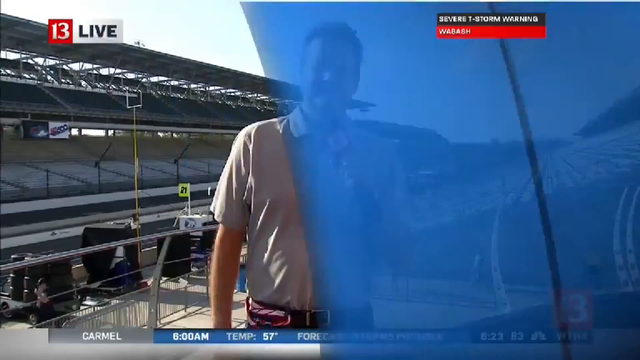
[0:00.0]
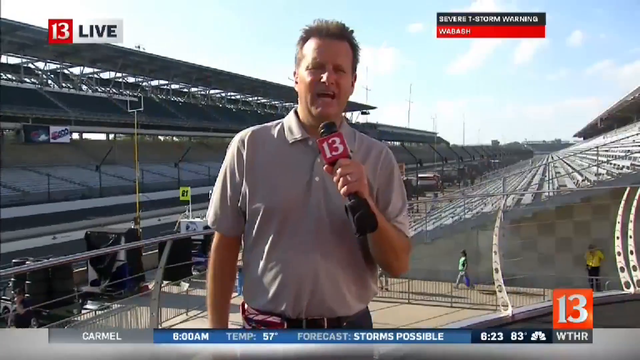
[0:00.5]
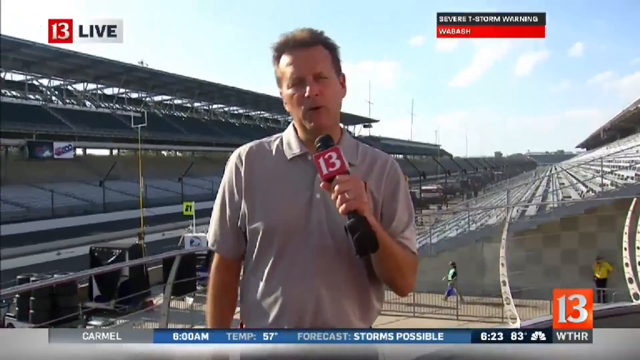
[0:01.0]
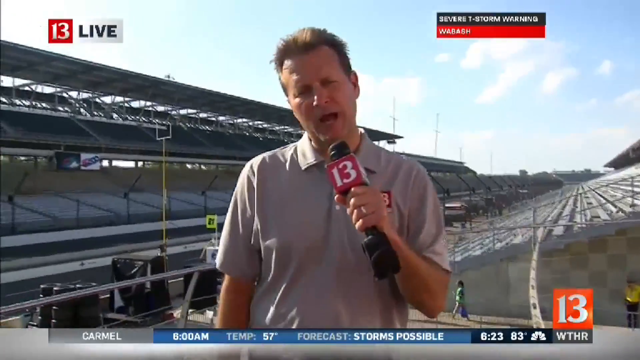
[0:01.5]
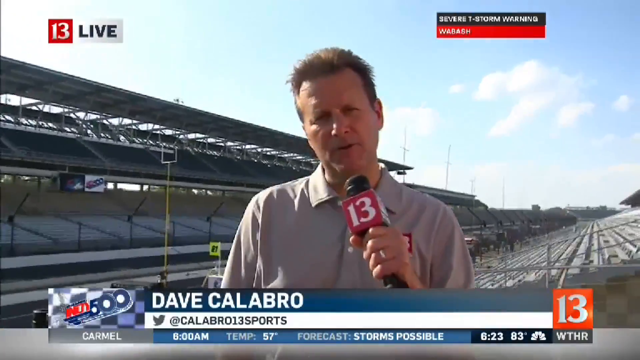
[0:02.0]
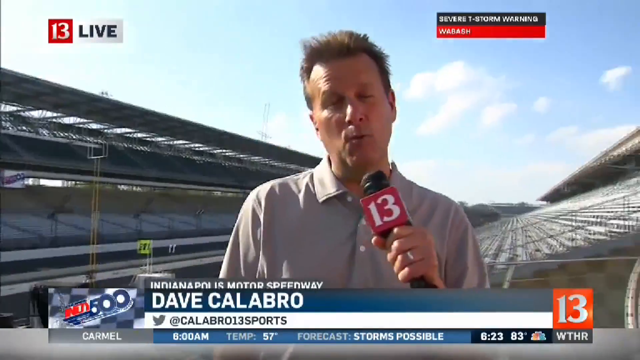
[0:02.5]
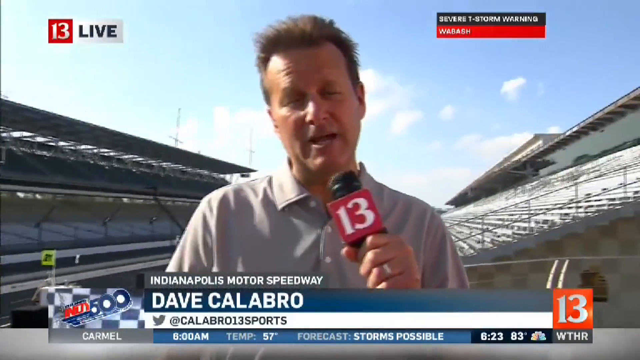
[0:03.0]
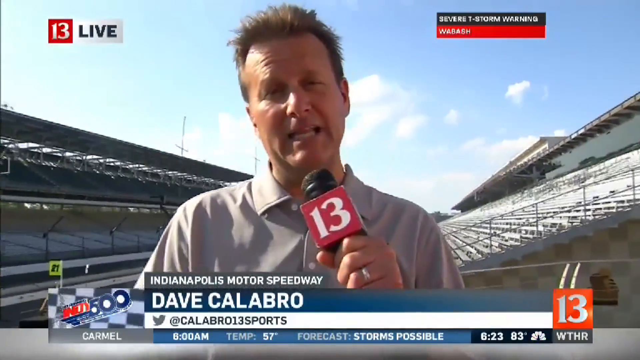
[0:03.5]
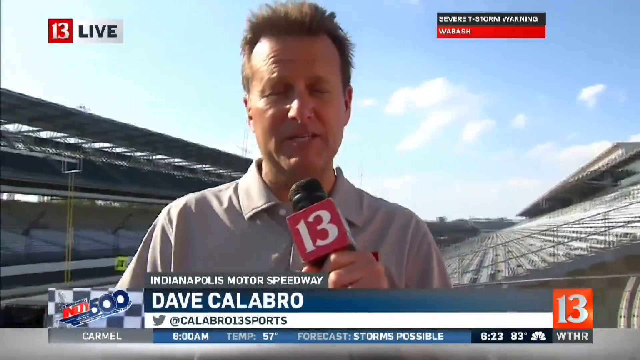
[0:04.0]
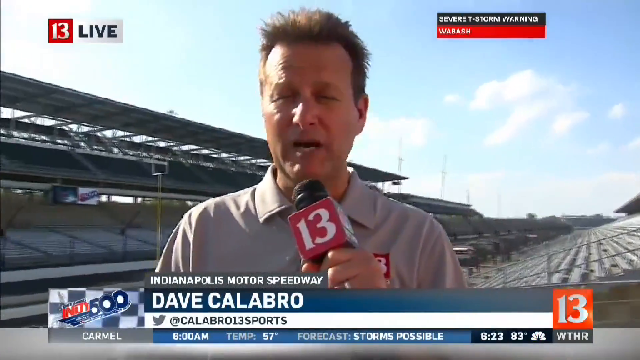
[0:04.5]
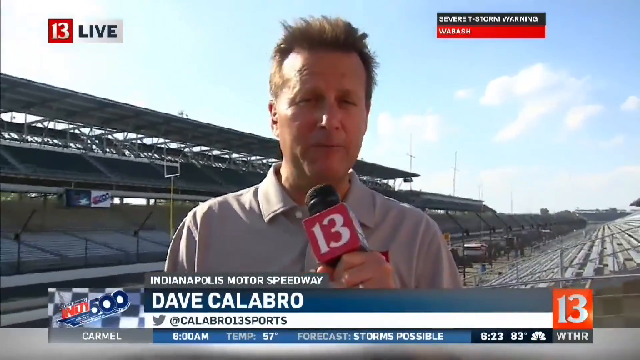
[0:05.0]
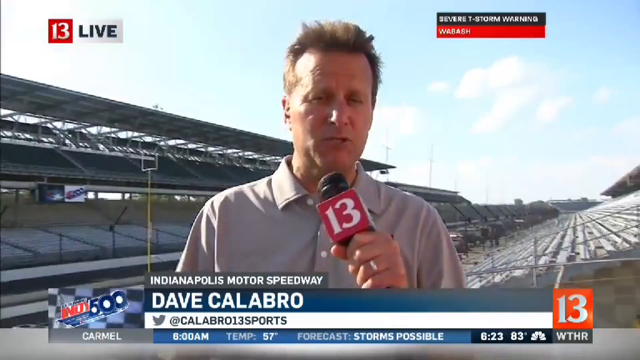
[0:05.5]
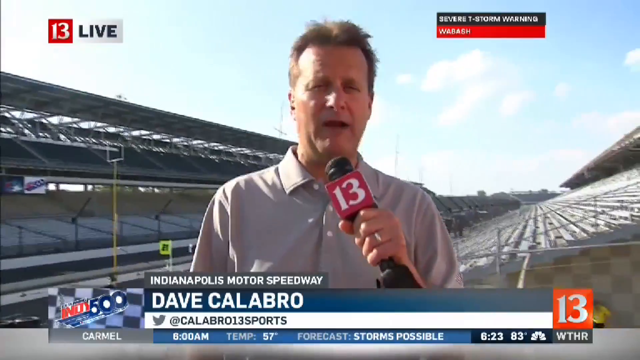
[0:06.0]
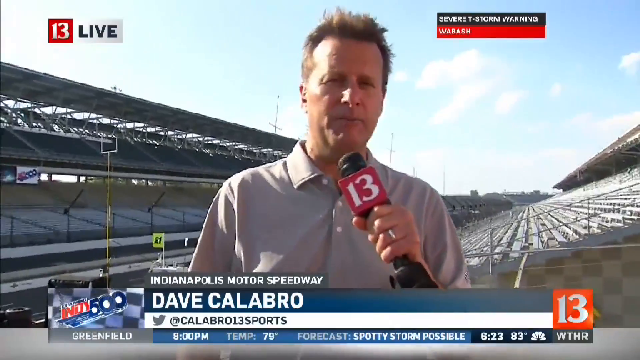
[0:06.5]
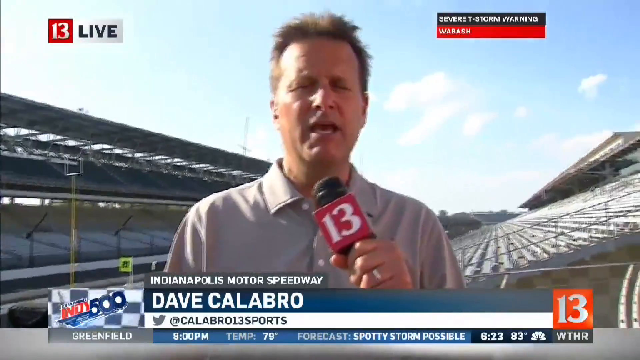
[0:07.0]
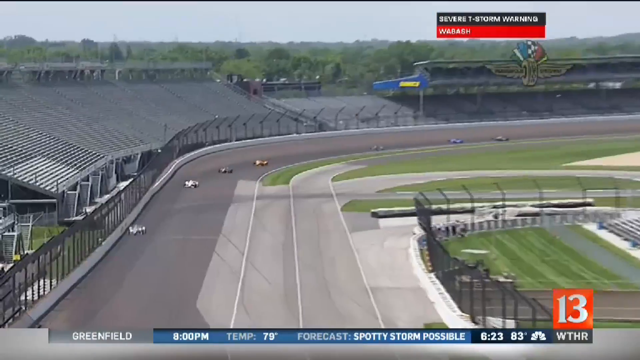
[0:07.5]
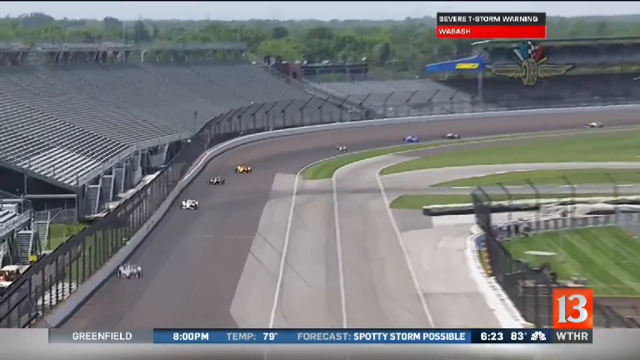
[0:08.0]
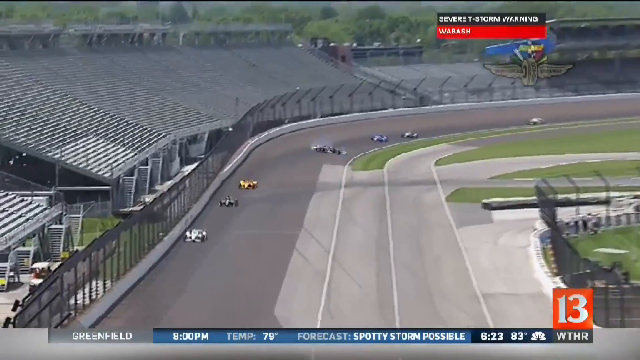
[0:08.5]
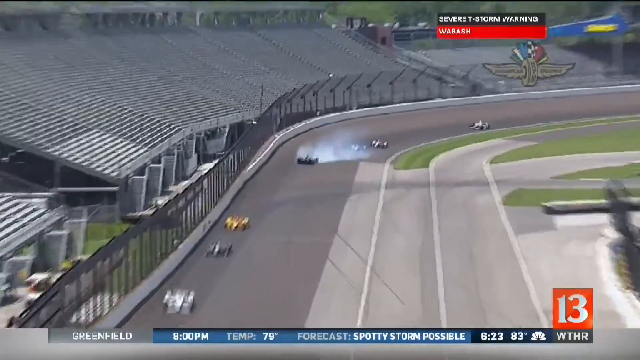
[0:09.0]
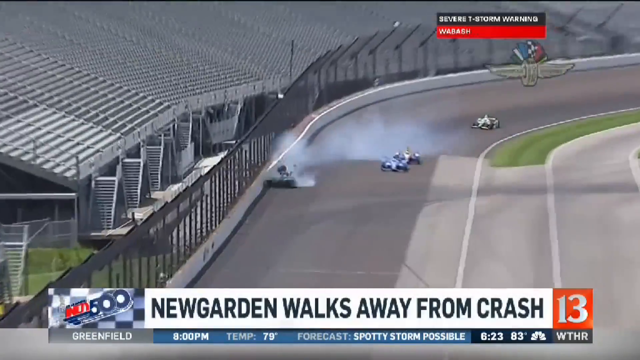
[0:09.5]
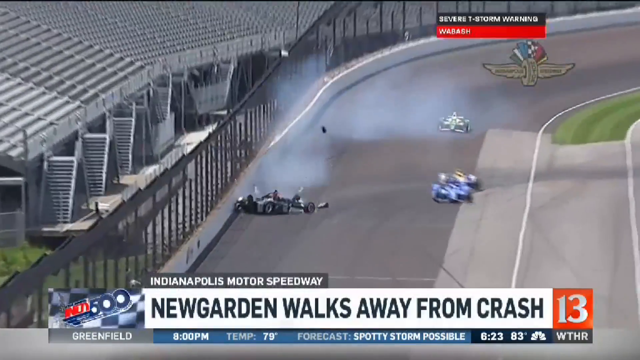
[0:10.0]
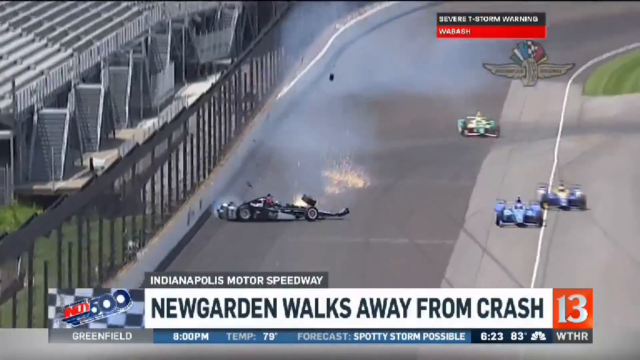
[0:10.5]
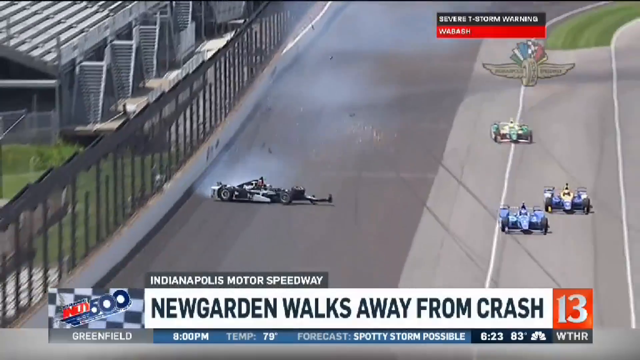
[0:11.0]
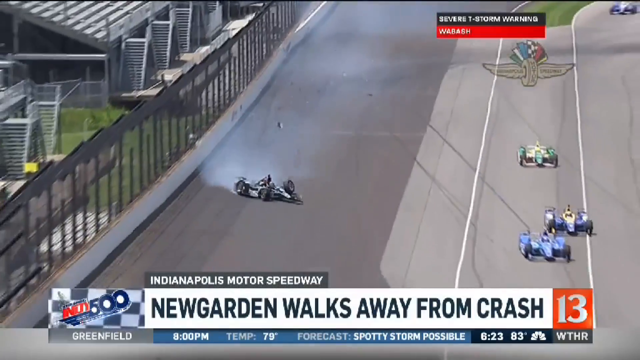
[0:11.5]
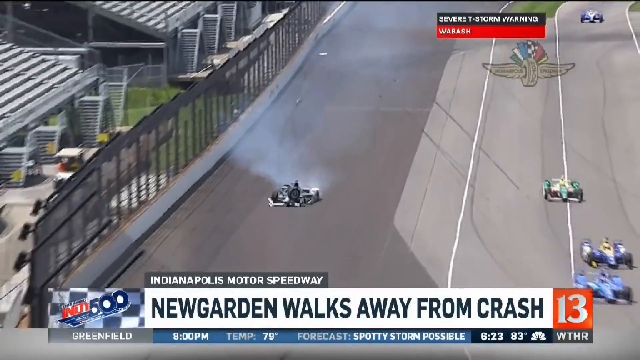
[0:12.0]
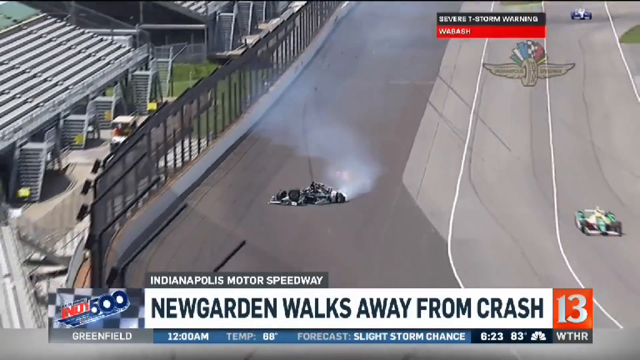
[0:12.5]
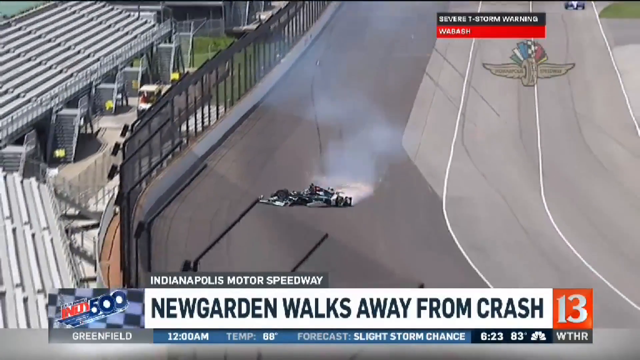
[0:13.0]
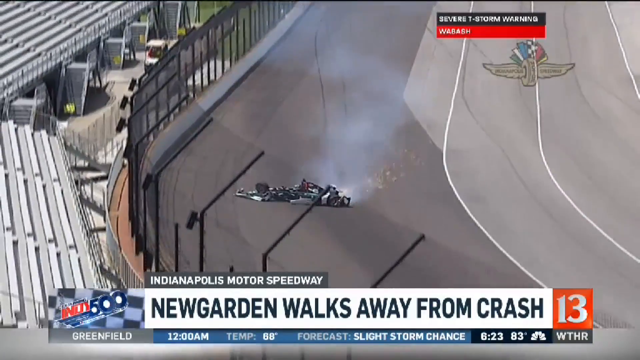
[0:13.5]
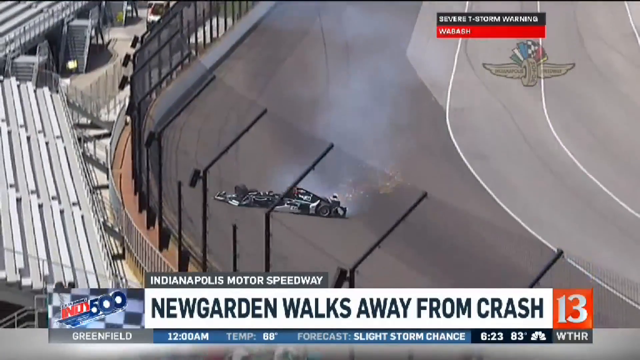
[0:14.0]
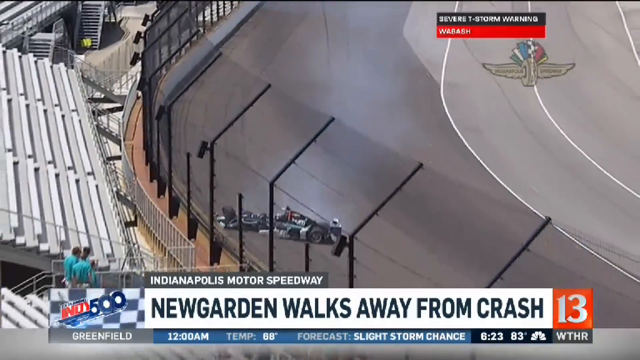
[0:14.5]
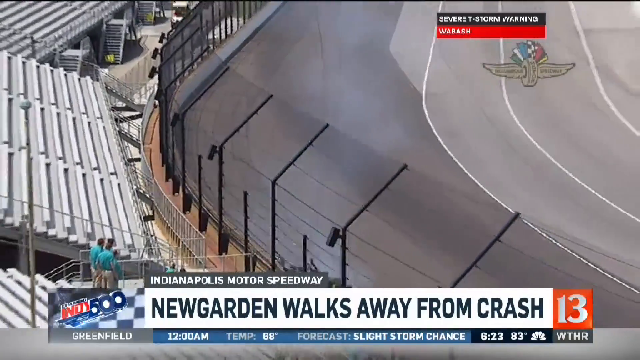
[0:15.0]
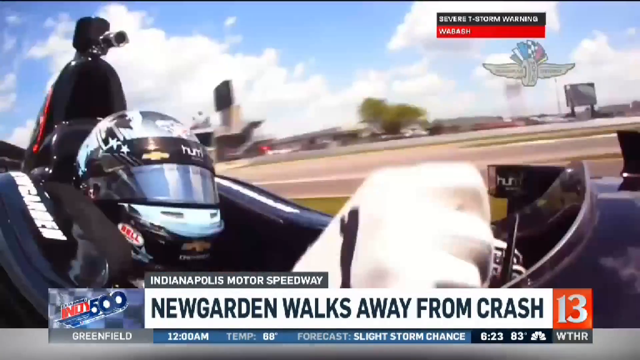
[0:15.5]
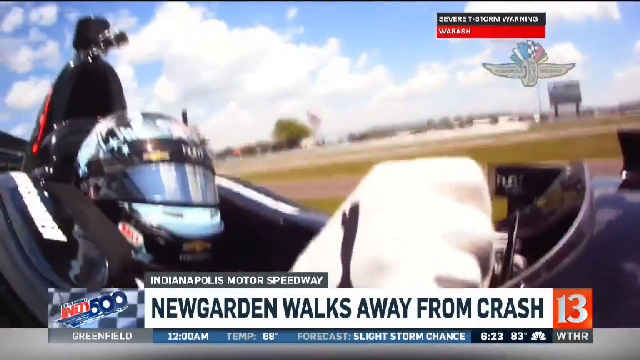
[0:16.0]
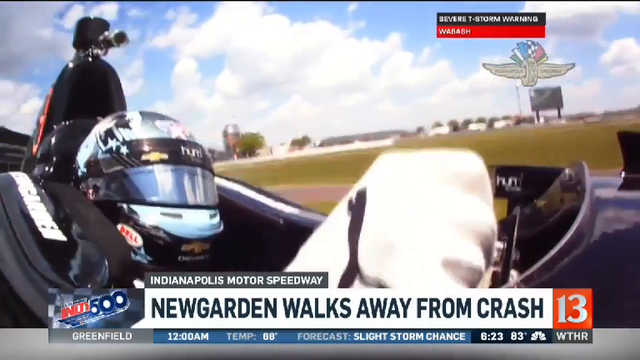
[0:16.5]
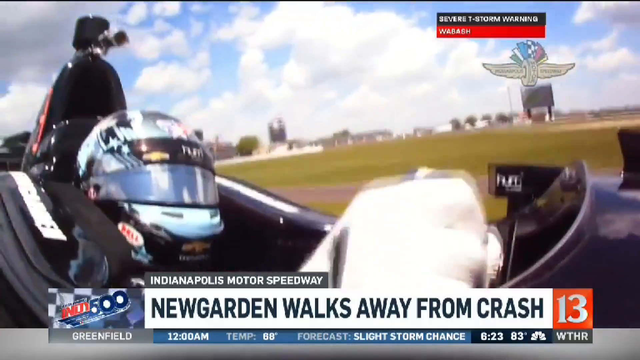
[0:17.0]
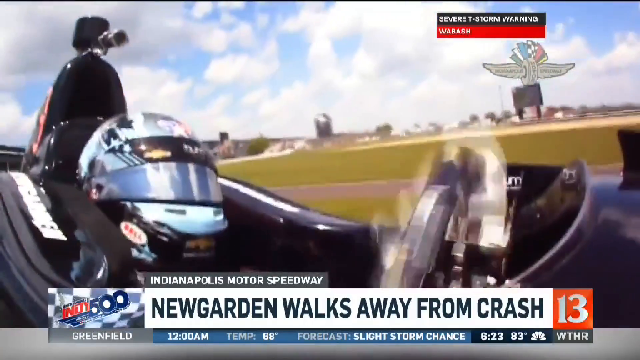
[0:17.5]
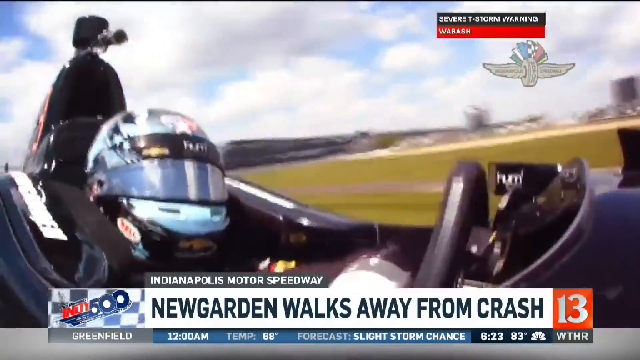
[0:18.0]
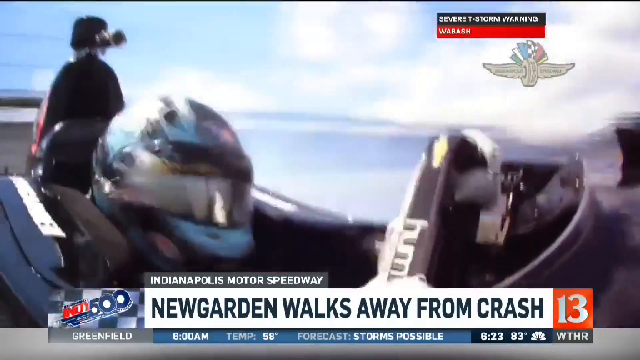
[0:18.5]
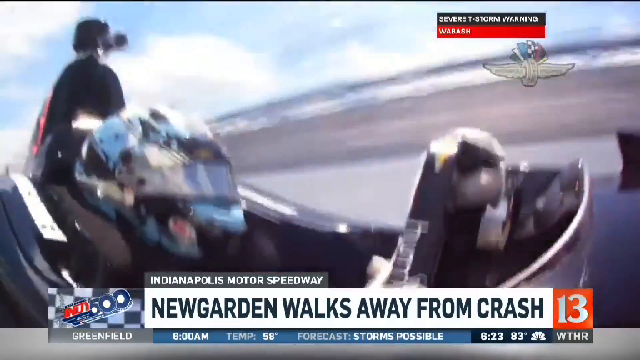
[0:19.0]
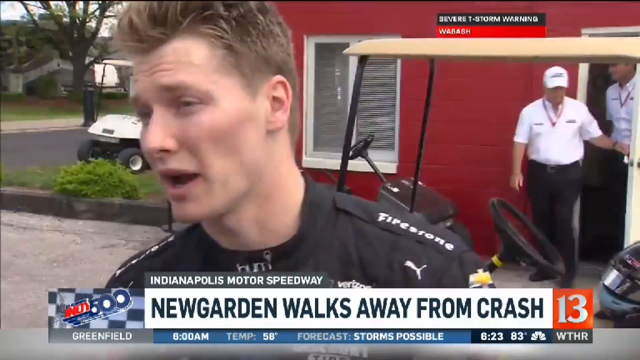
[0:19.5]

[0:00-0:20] A channel 13 WTHR news report shows TV news reporter Dave Calabro at the Indy 500 at the Indianapolis Motor Speedway, reporting on how Newgarden walks away from a crash. Banners show the reporter's name and that Newgarden walks away from a crash. Footage of the Indy 500 race shows a car going against the wall and turning; it probably has to leave the race. The crash is then seen from inside the car, and at the end there seems to be an interview with a driver. The captions first read "Carmel 6am", a temperature of 57 degrees and the forecast "storms possible", then "Greenfield 8pm", a temperature of 79 degrees and the forecast "spotty storm possible".